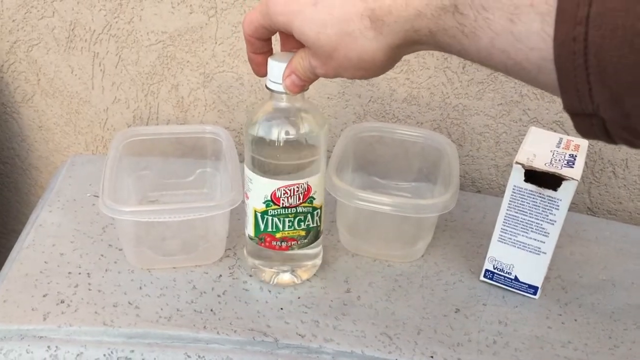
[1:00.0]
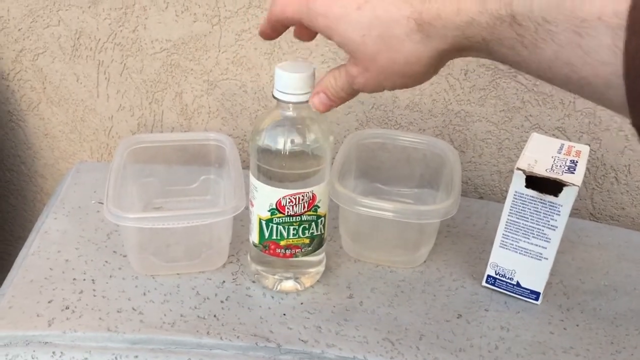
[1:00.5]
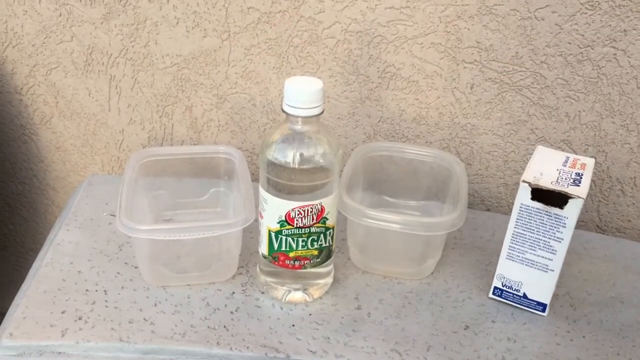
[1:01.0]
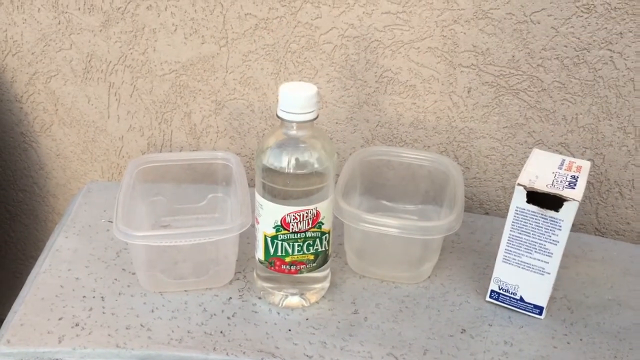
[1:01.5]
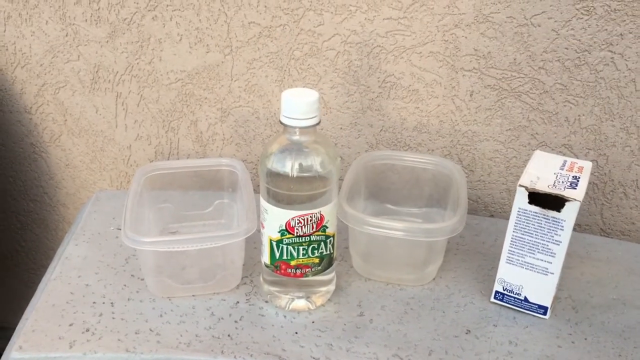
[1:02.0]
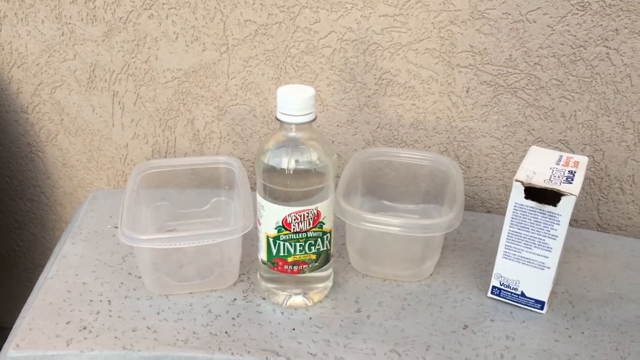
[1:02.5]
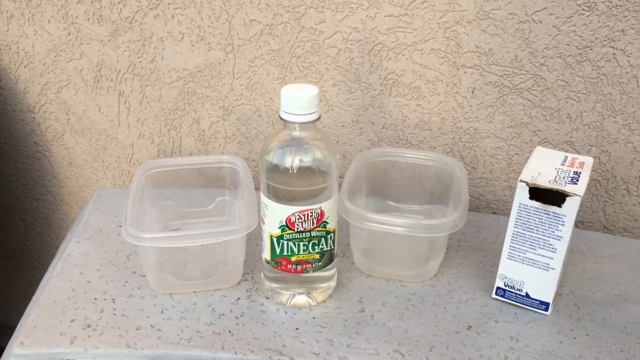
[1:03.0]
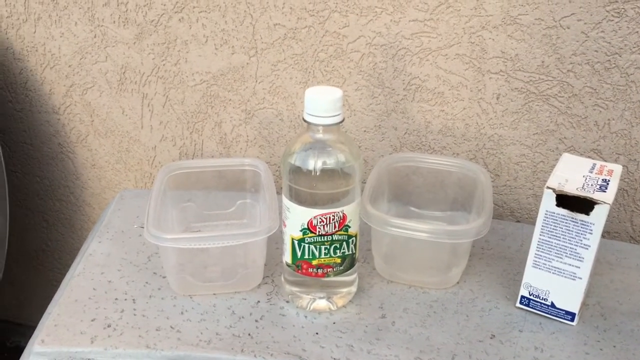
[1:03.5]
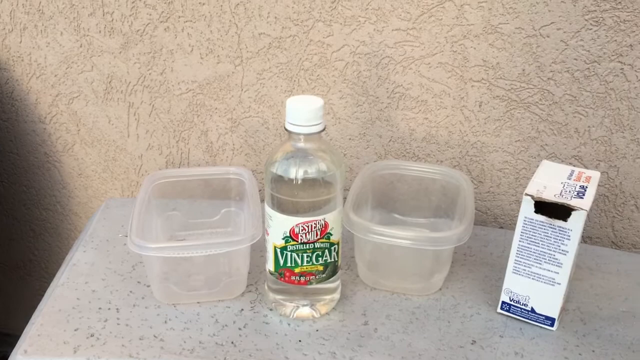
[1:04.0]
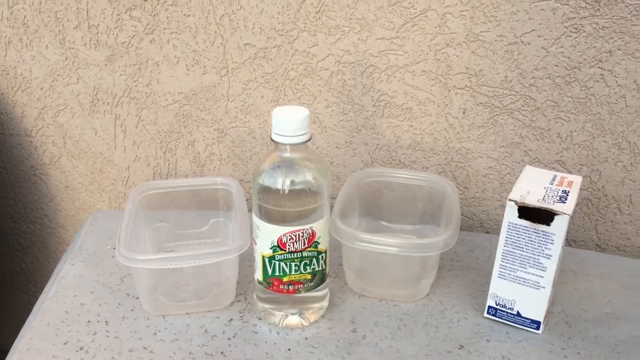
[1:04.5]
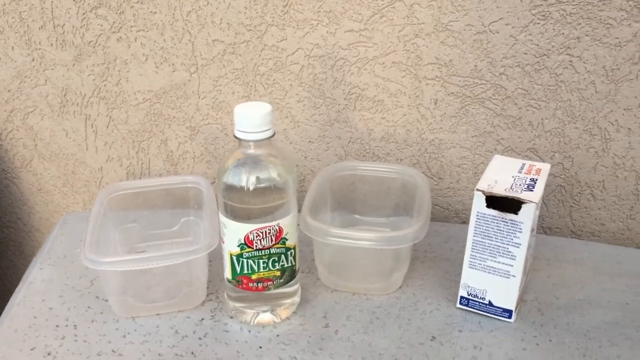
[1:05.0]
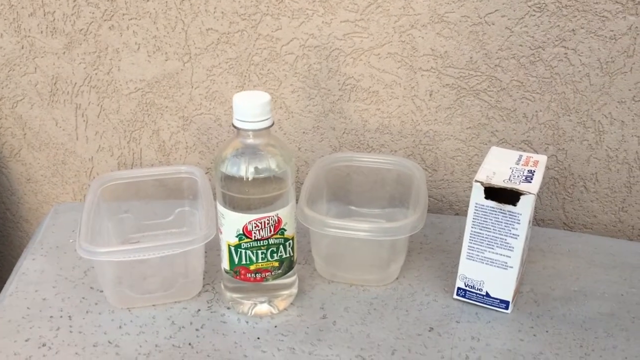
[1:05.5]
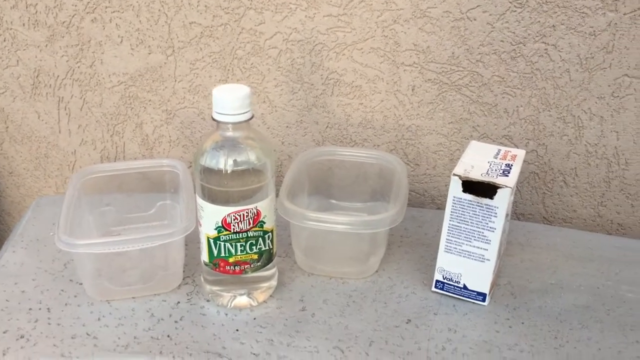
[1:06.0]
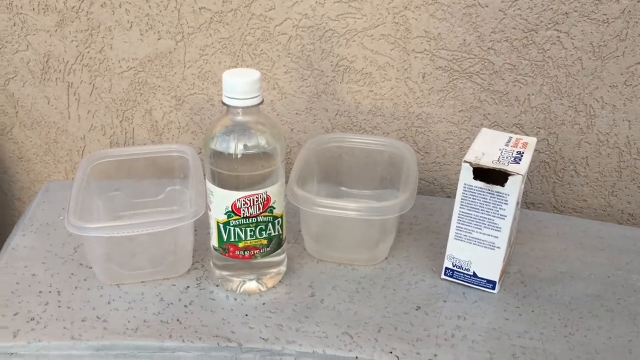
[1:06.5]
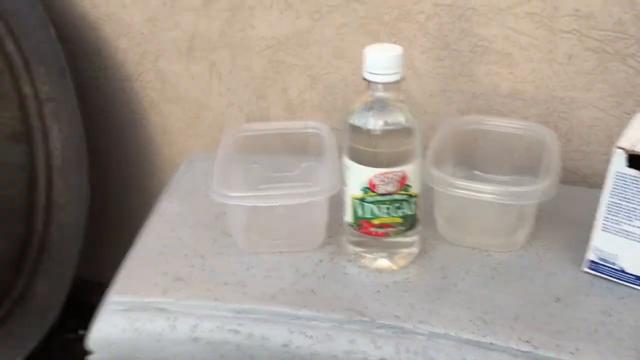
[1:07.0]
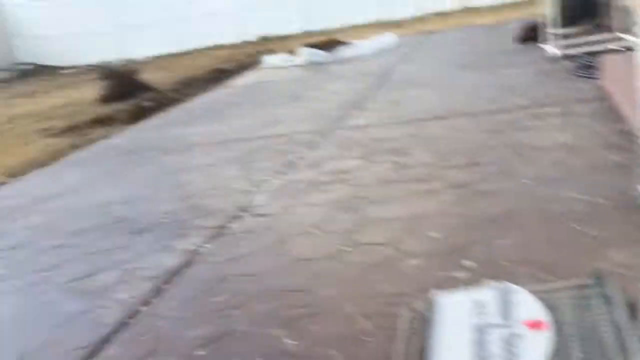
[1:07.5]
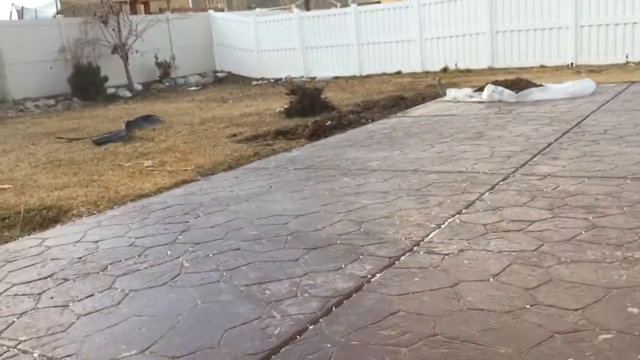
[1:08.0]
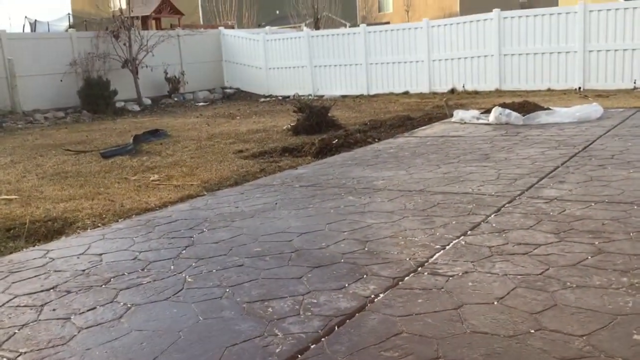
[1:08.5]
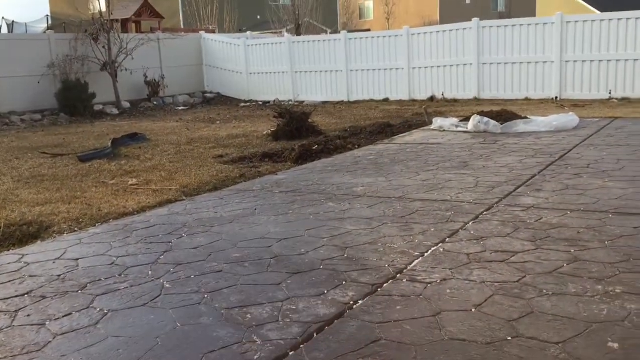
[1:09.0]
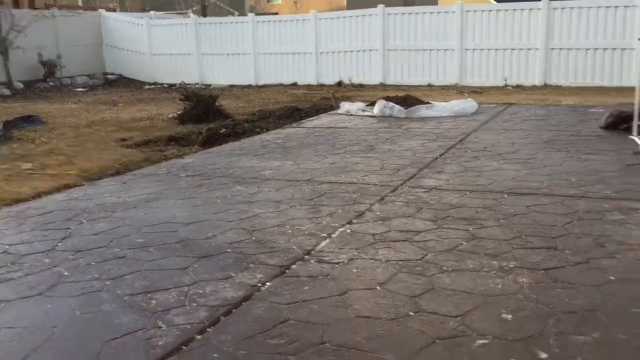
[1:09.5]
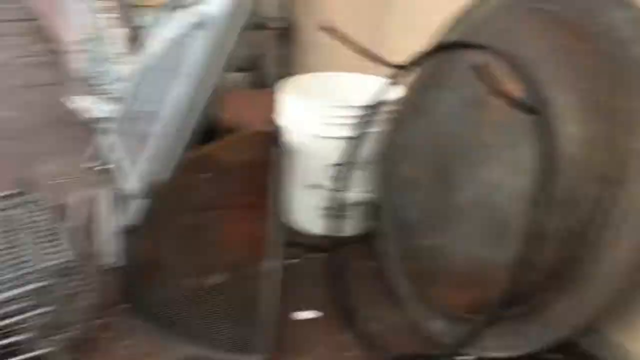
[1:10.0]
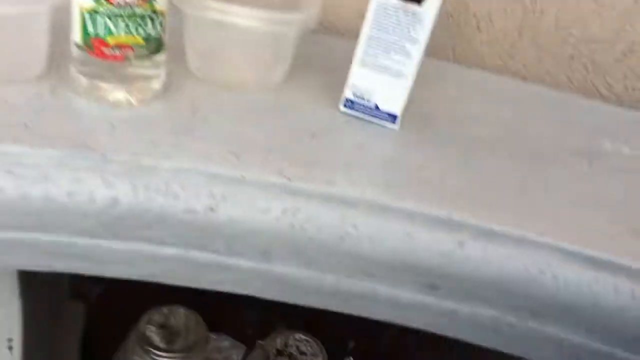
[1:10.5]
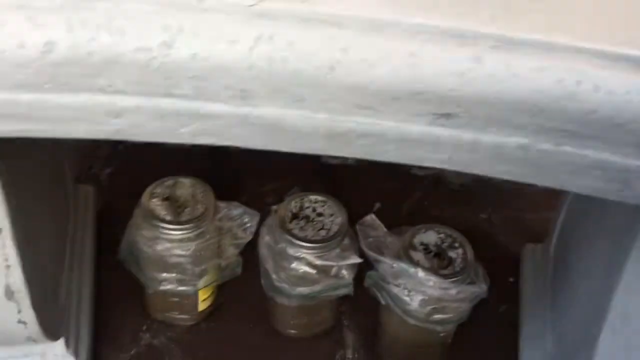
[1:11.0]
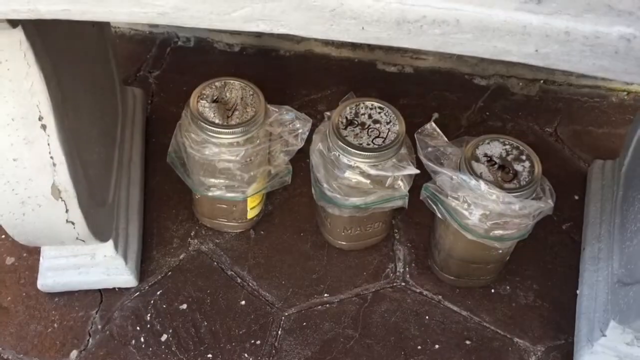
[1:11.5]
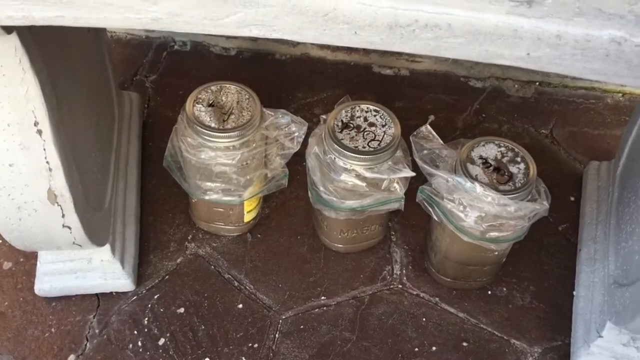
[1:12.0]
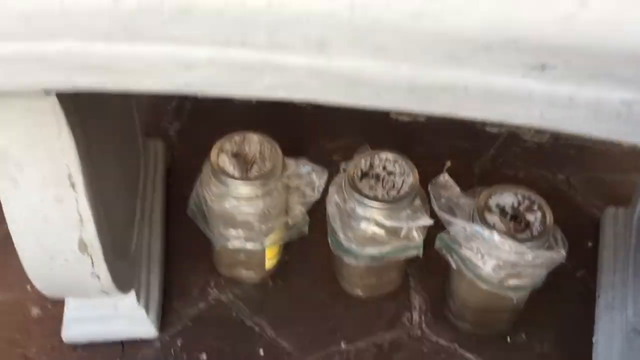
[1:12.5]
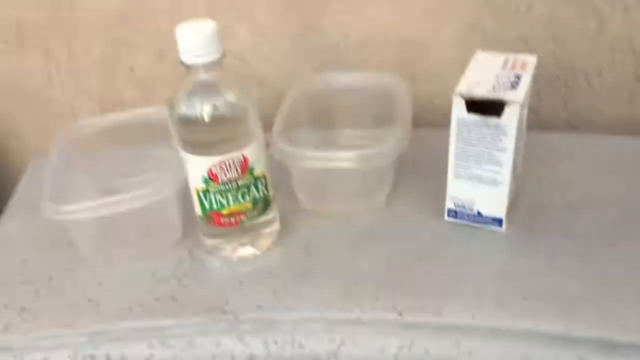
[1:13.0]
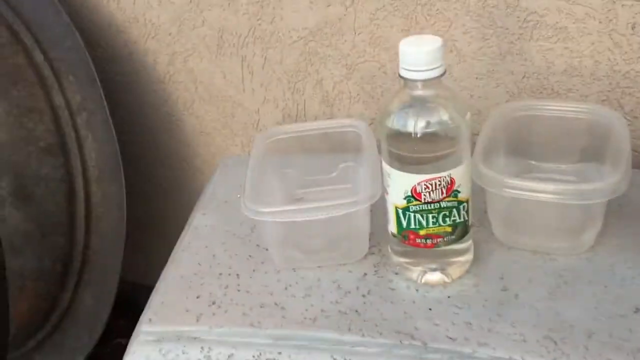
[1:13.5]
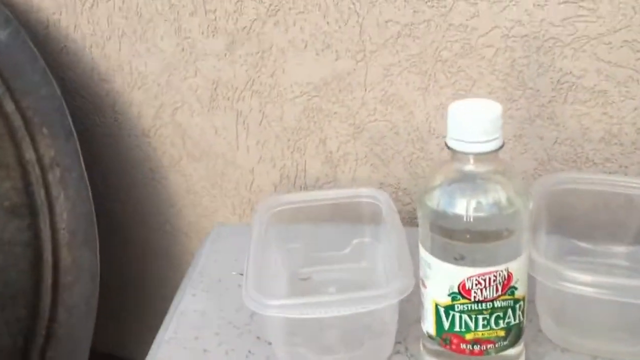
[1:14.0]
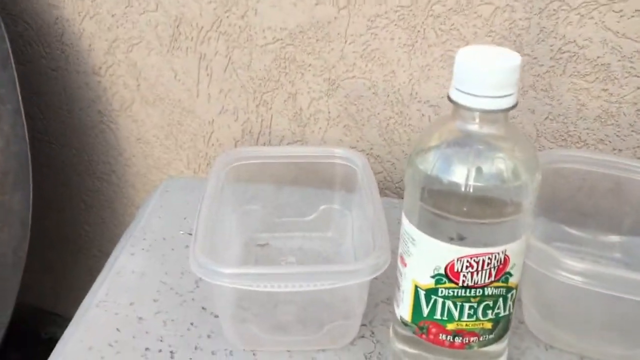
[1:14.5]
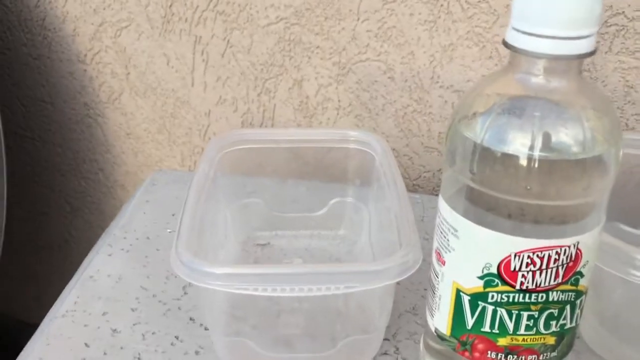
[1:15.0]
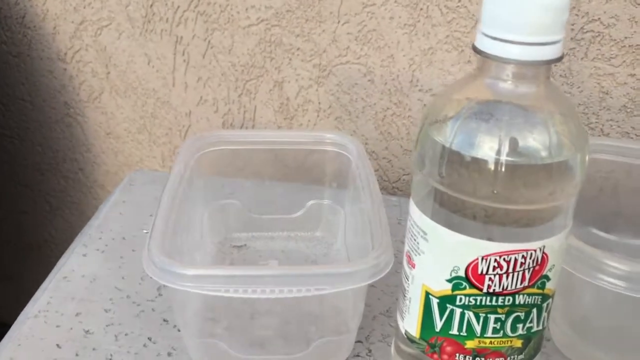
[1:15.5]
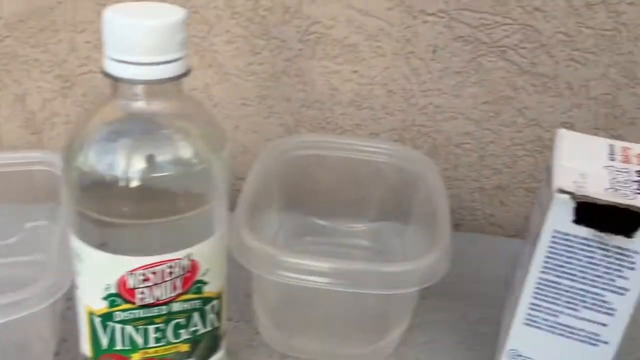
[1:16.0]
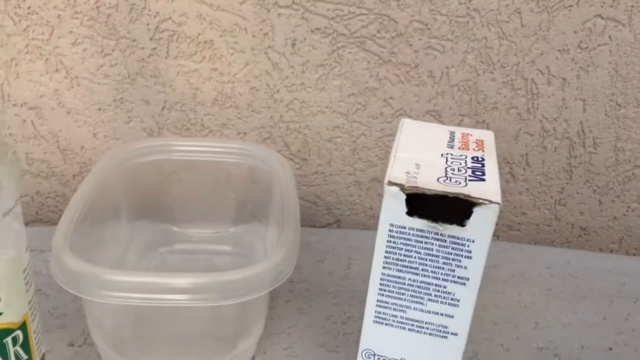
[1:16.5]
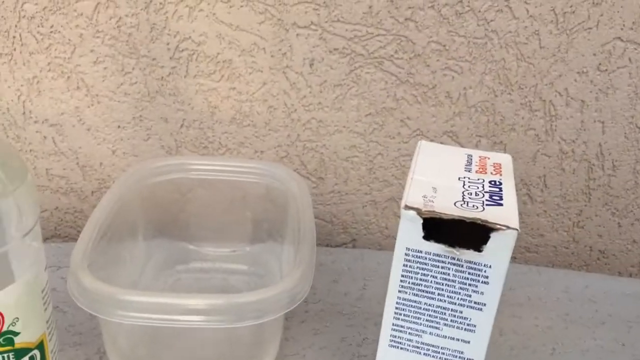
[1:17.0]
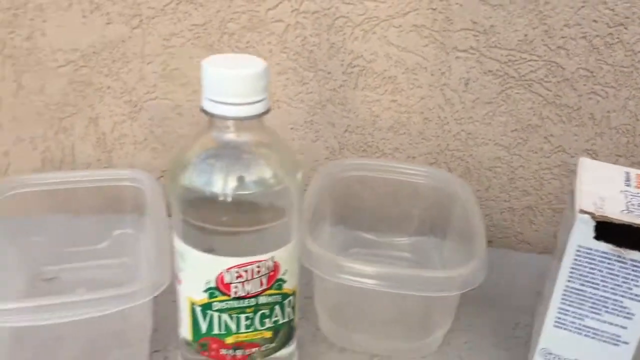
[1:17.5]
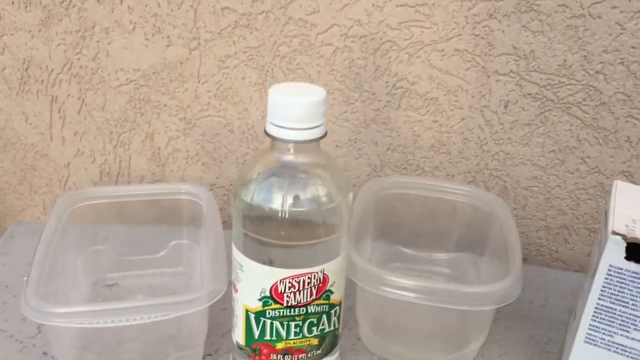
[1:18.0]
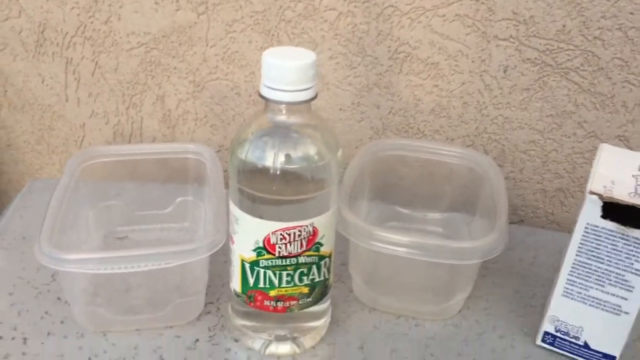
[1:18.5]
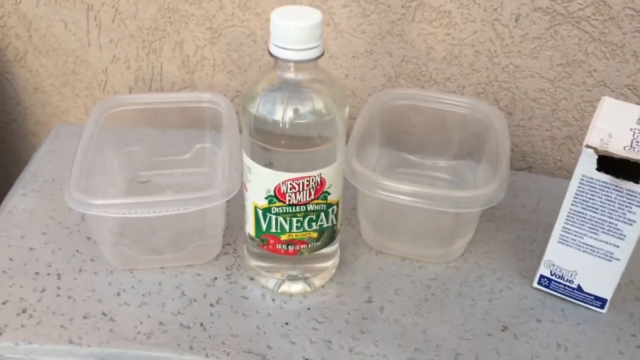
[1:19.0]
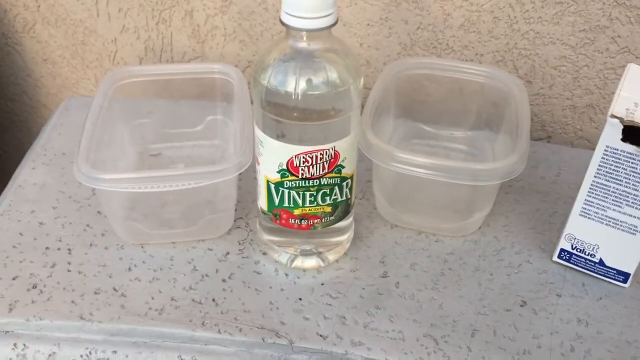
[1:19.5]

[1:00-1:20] Two small Tupperware tubs are on a tabletop, with a jar of vinegar between them, sort of in the center of the screen. On the right is an open box of baking soda, where the spot the baking soda pours out from is visible. A Caucasian man's right arm reaches in from the right side, holding the vinegar, then sets it back down, and the vinegar jiggles slightly back and forth. The camera pans left to show a white wooden fence, some brown grass and a small tree; behind the fence there appear to be some buildings, maybe houses, and a cement or stone walkway is on the right side of the screen. The camera pans back to the table and shows underneath it, where three mason jars have plastic sandwich baggies over their tops and look full of a brown substance. The camera pans back up to the top and zooms in on one Tupperware and then the other.